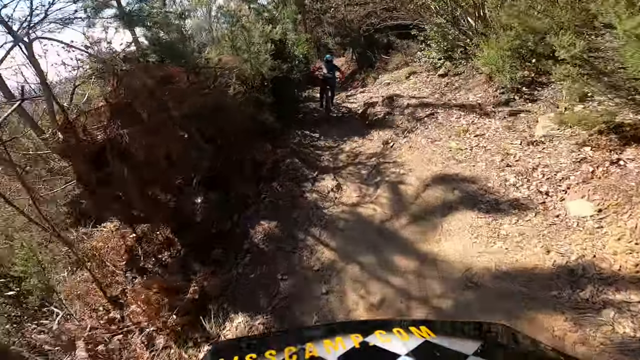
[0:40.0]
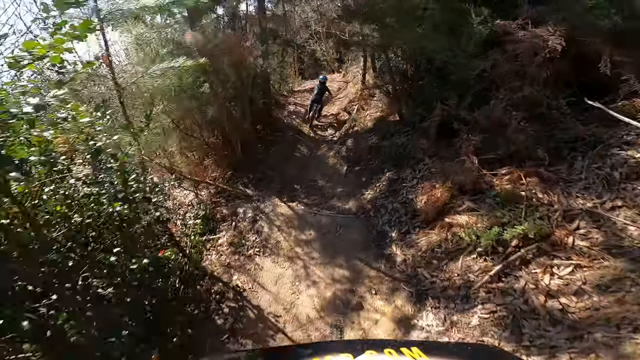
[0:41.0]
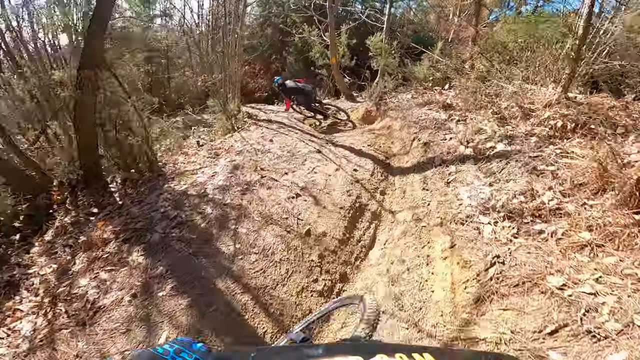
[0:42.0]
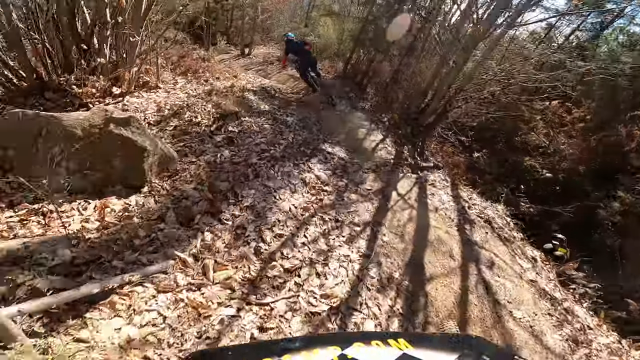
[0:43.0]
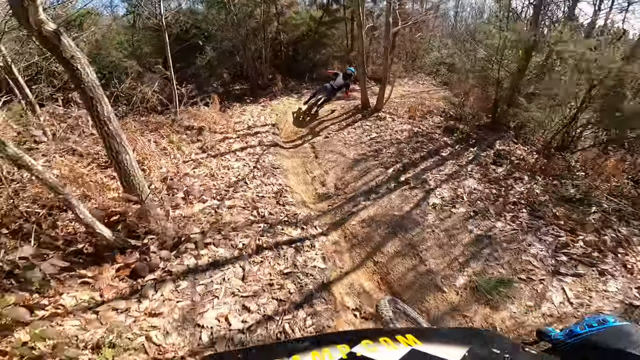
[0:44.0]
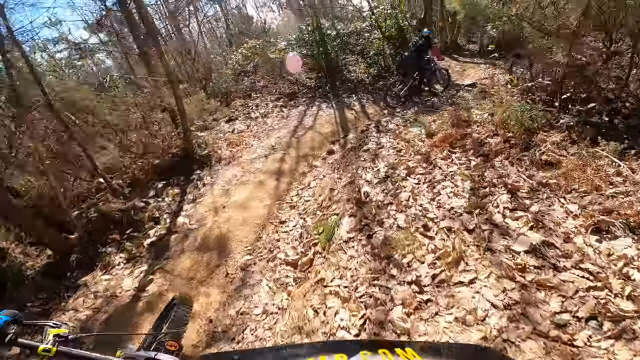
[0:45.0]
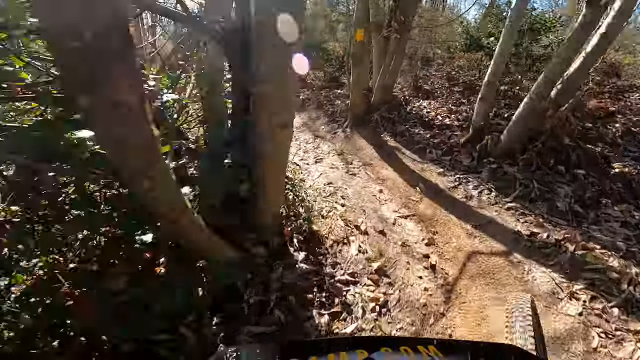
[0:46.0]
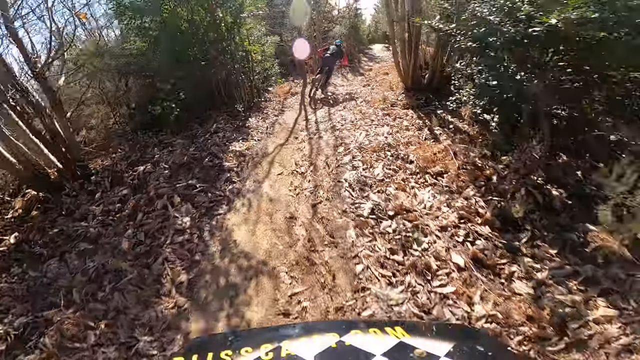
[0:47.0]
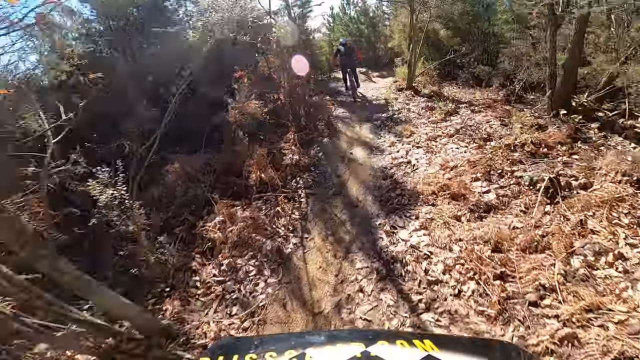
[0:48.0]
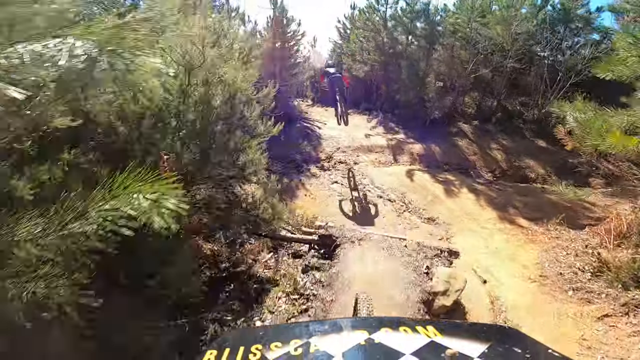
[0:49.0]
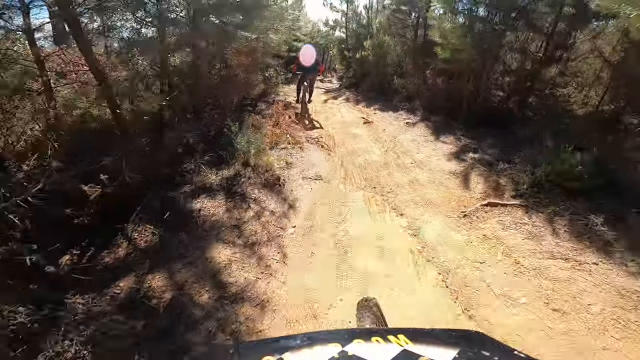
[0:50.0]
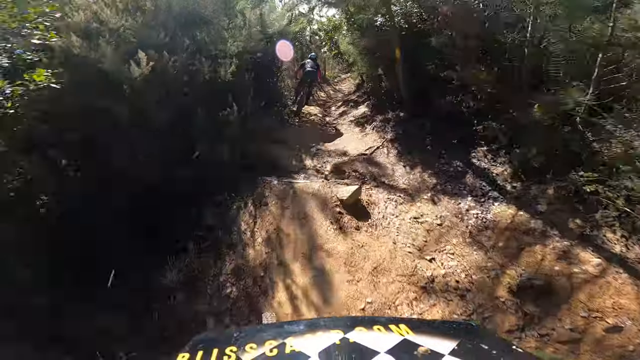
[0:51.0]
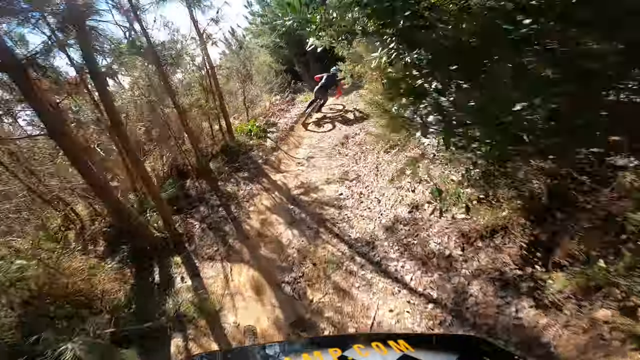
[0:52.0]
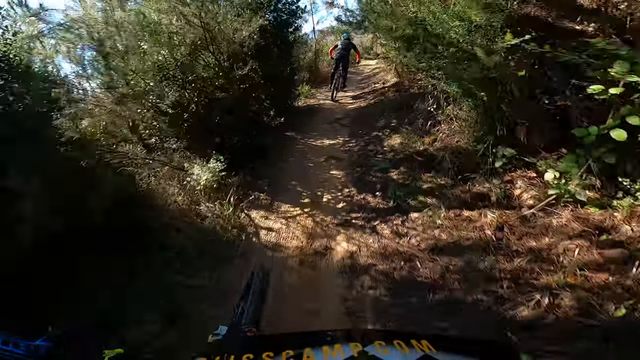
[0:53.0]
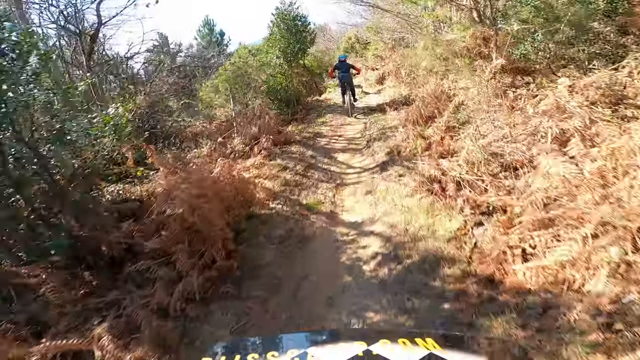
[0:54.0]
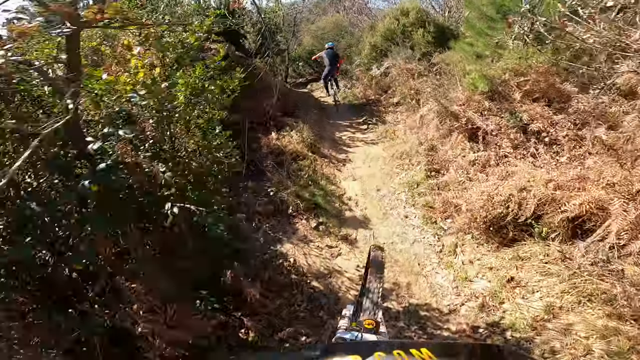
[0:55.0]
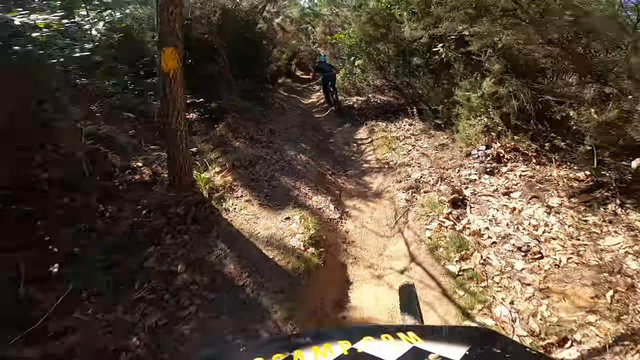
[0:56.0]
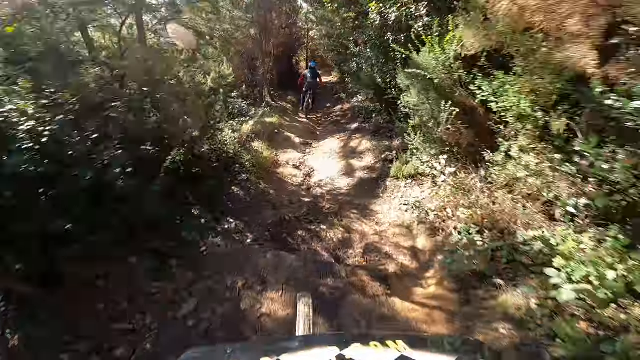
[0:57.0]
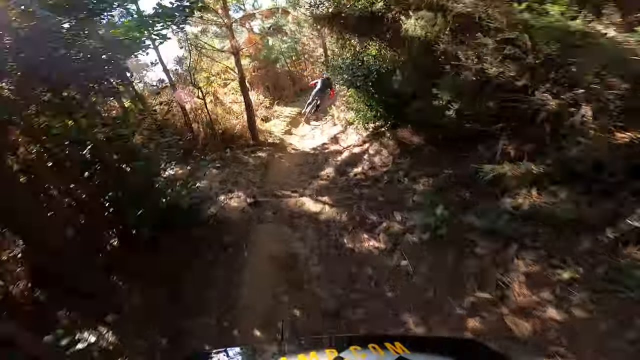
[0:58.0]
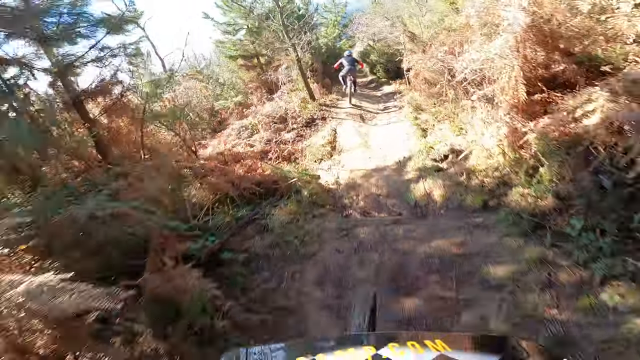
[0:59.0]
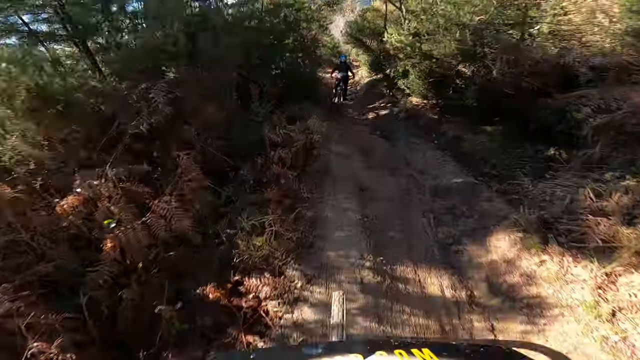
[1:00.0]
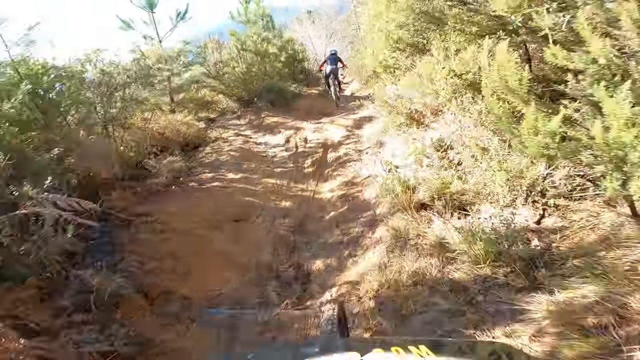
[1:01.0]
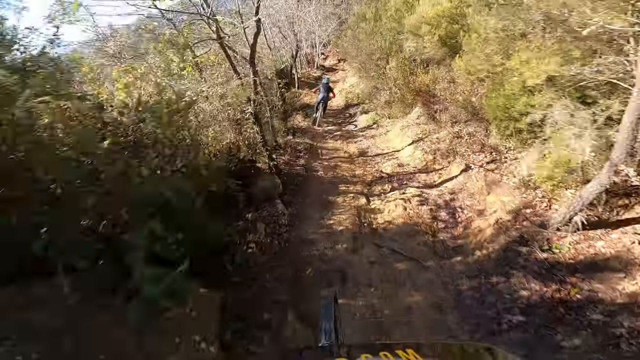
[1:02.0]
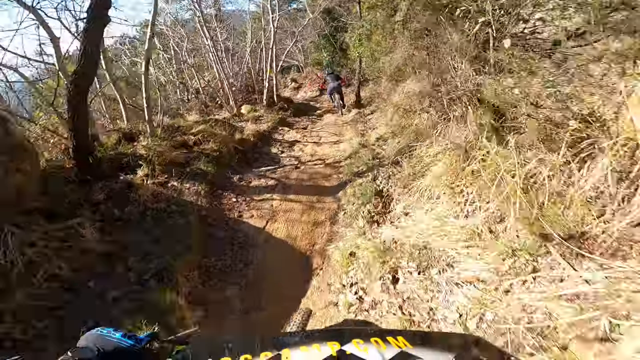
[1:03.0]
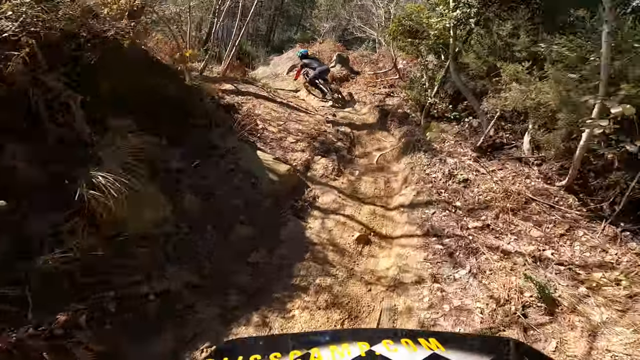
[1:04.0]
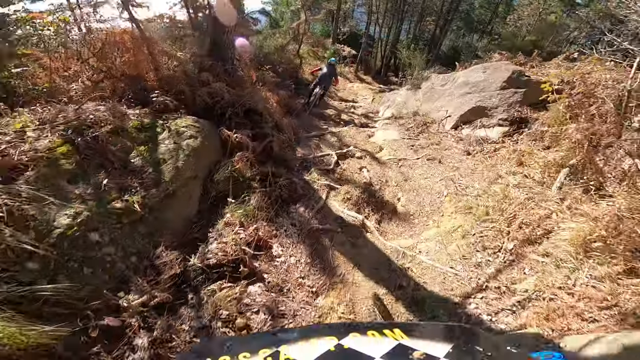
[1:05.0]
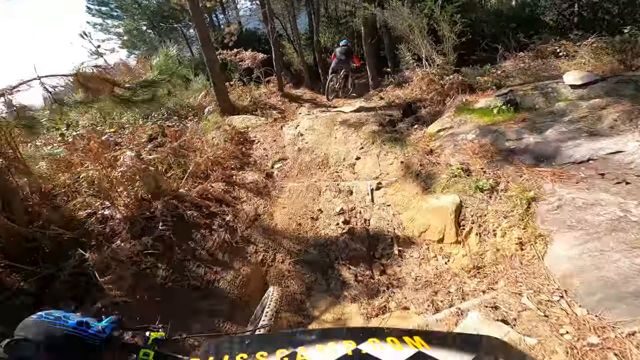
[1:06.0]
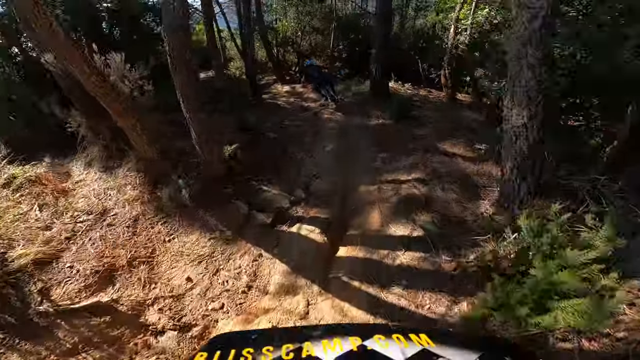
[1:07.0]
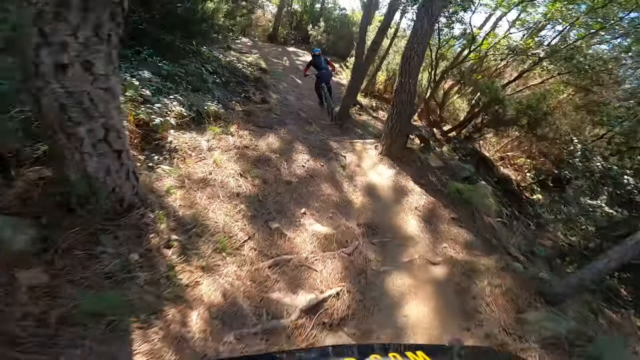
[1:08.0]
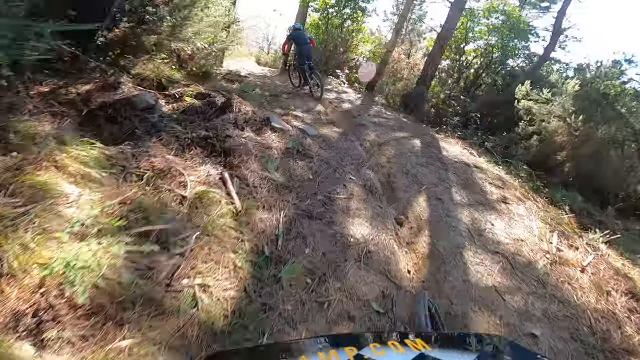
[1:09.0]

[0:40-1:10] The camera continues following the biker, who is about 10-15 yards ahead while the camera keeps pace. He makes a hard left, then a hard right on the very wavy road, then another left. He jumps over some water, curves left and does another jump. The camera swerves right while following him. He does another jump in the air, takes a hard left, curves to the right, and the camera moves left again. The camera catches up a little, to maybe about 10 yards behind him. The dirt road is probably about three to five yards wide, with rocks all over the place and a lot of trees and bushes to the right and left. He navigates it well.